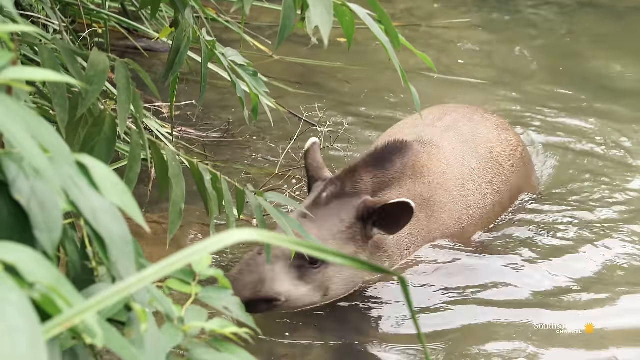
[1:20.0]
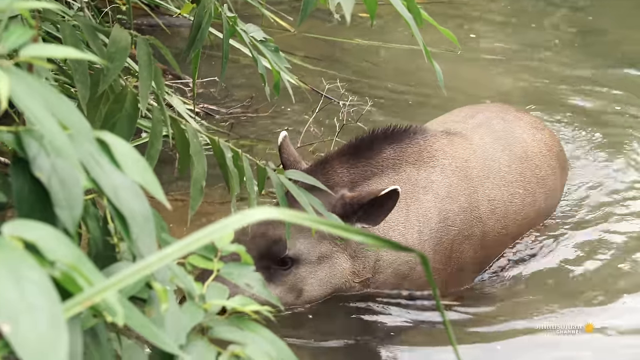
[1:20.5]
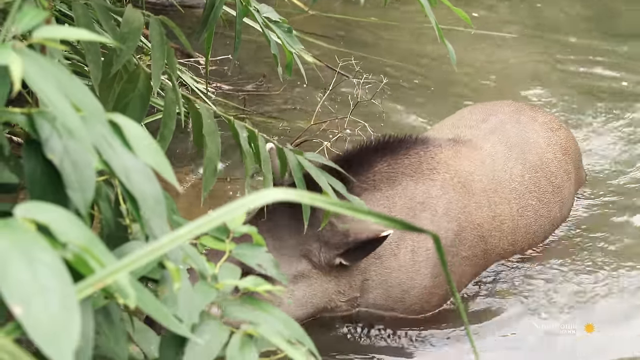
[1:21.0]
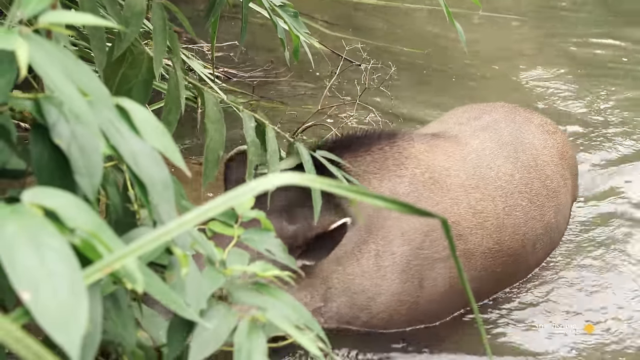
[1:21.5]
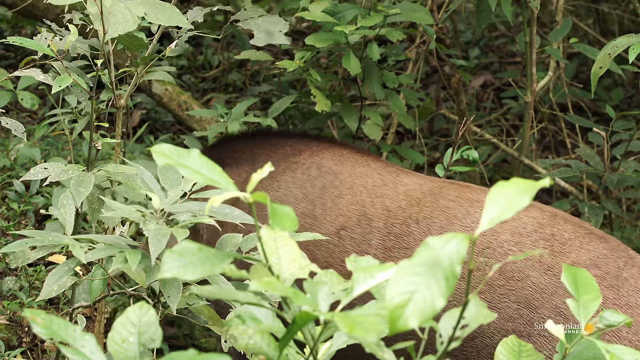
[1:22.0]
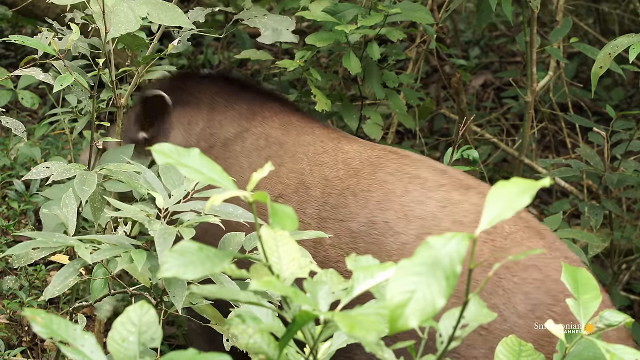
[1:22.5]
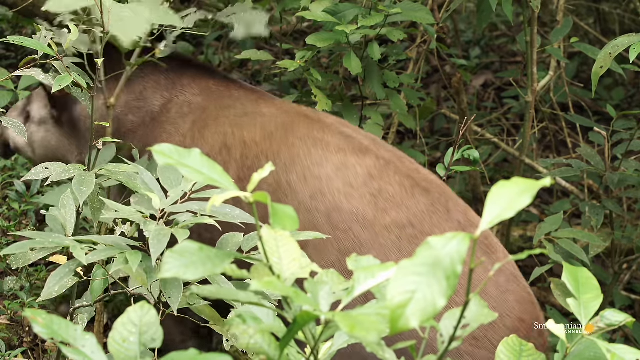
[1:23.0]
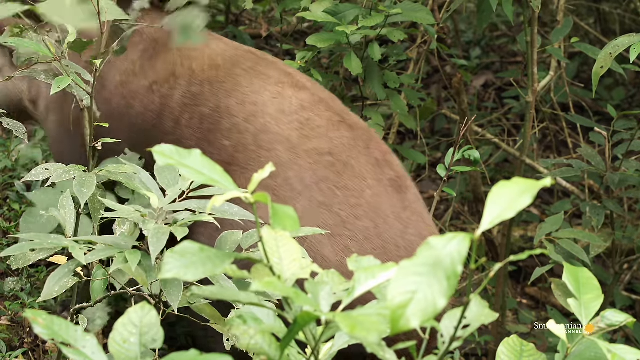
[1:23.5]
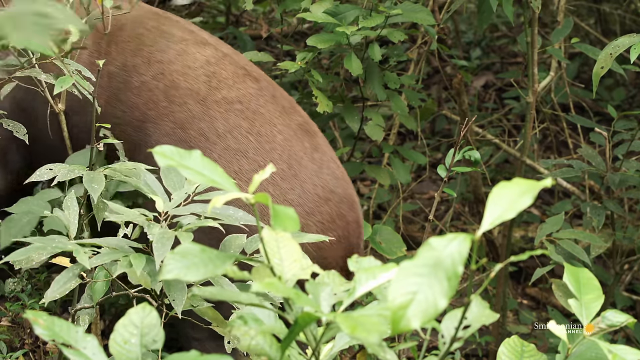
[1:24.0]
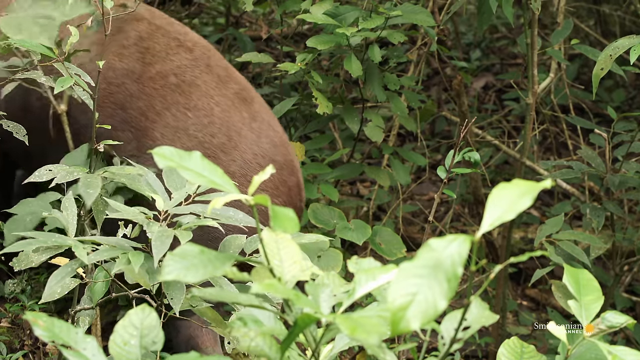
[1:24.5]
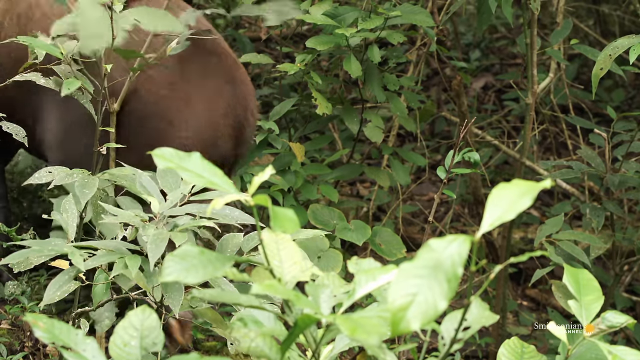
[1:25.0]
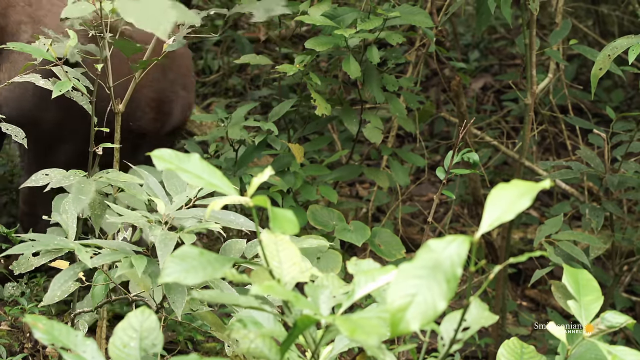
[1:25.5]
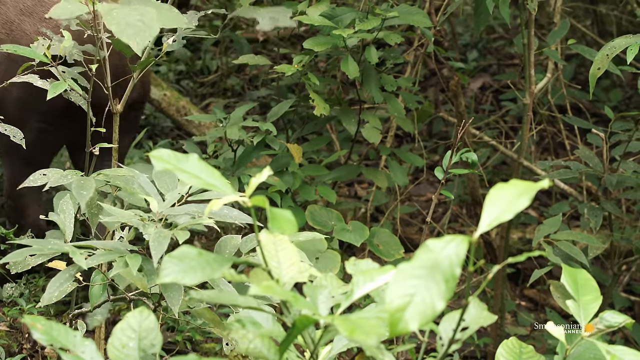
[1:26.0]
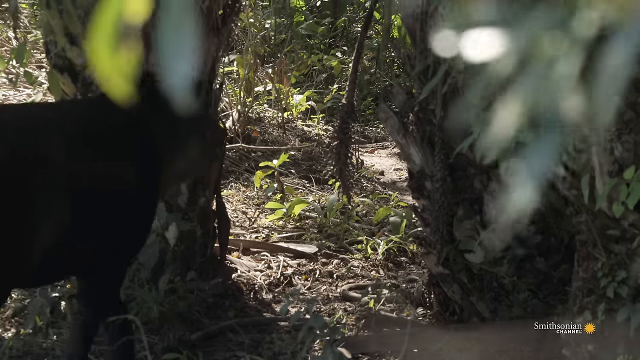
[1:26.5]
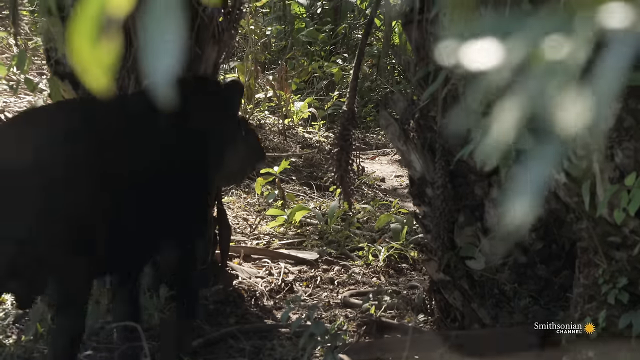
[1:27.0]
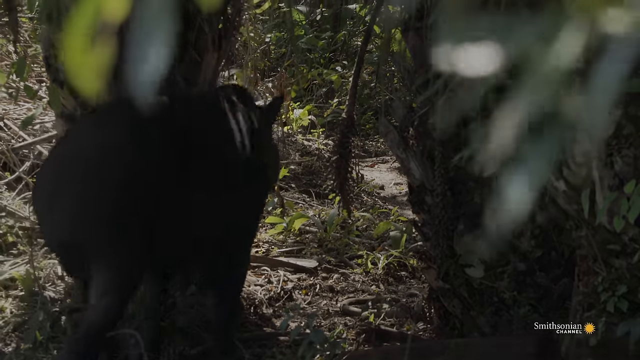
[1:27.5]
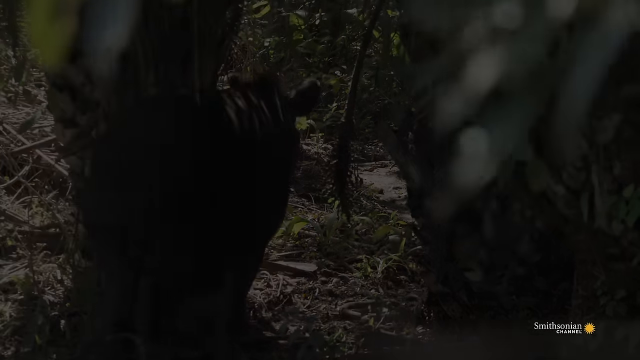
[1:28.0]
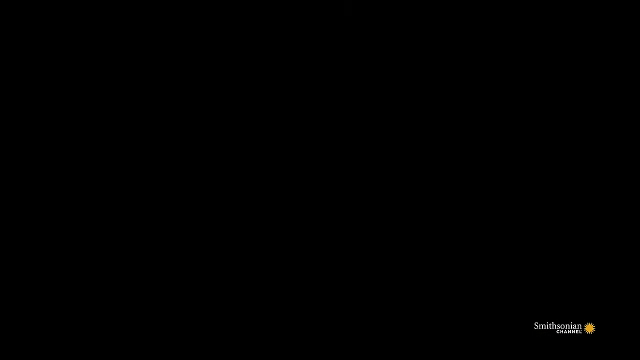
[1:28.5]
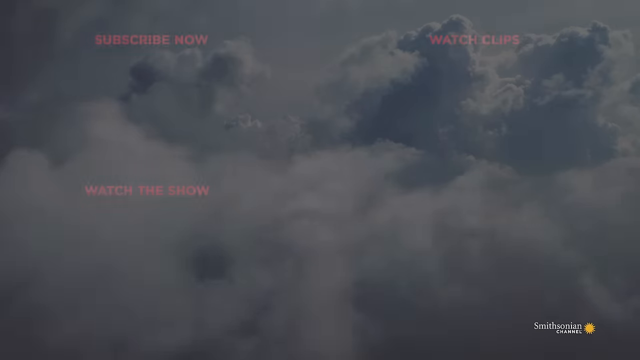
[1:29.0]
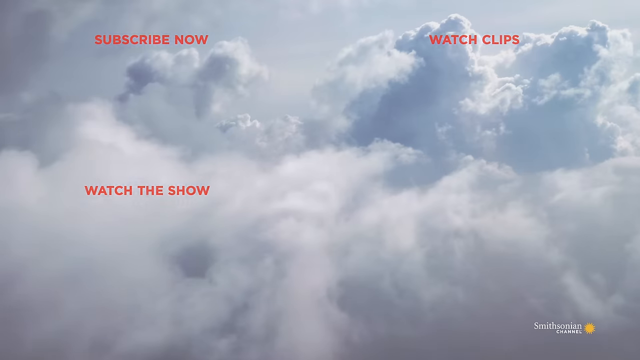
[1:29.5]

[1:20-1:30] Getting out of the water, the brown animal climbs back into the green vegetation it came from. Plants lean into the greenish-brown, murky water; they have long, slim green leaves in bunches on a long branch. The animal has ears that look almost like something out of a cartoon, sort of a cross between a pig's and some other animal's, and a heavyset, short, stocky body. It is possibly some sort of boar.